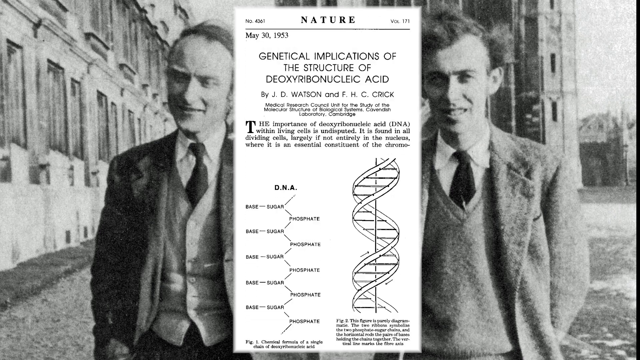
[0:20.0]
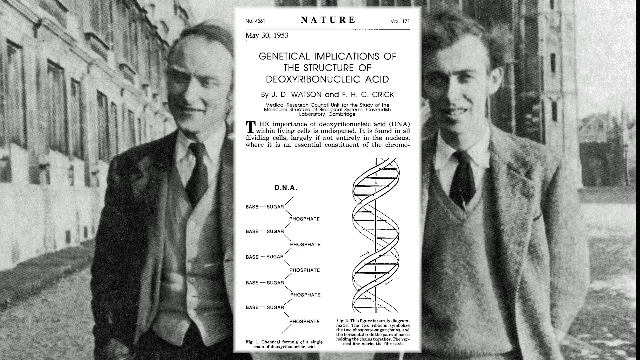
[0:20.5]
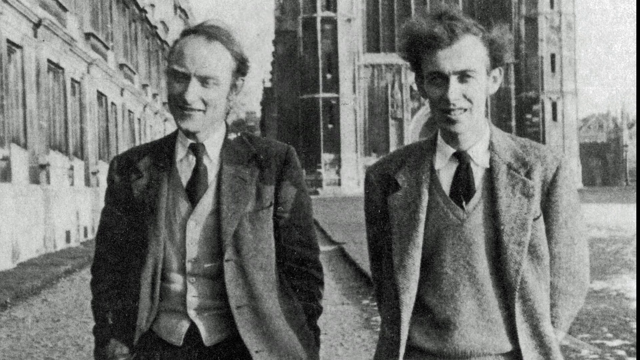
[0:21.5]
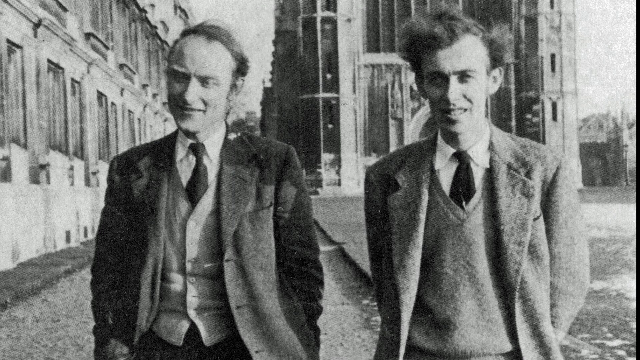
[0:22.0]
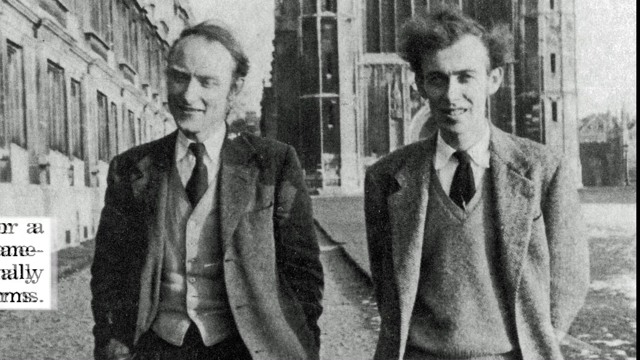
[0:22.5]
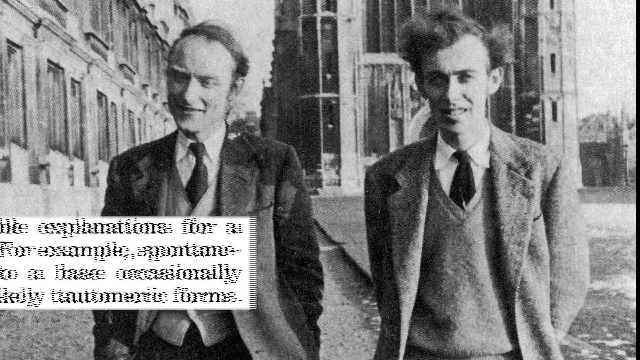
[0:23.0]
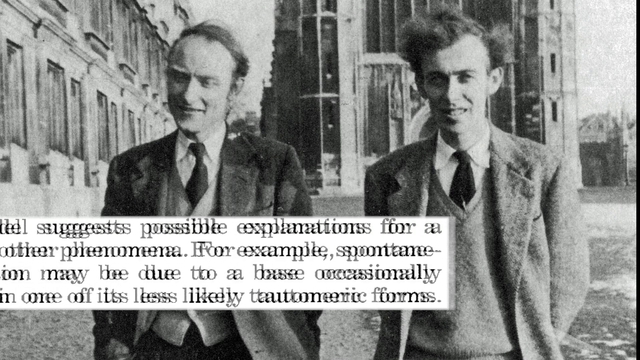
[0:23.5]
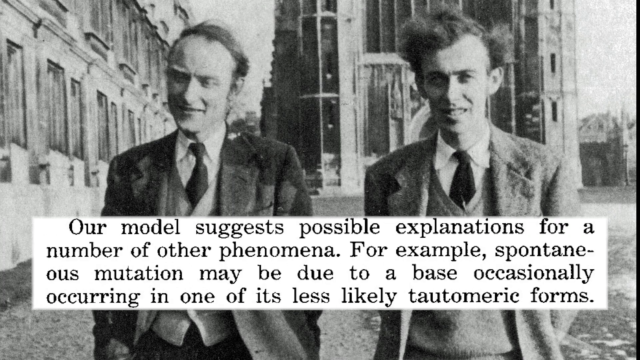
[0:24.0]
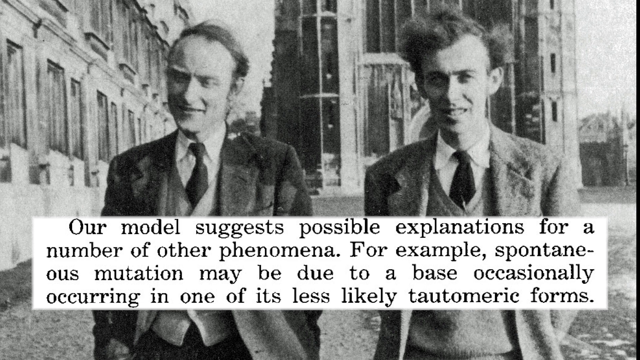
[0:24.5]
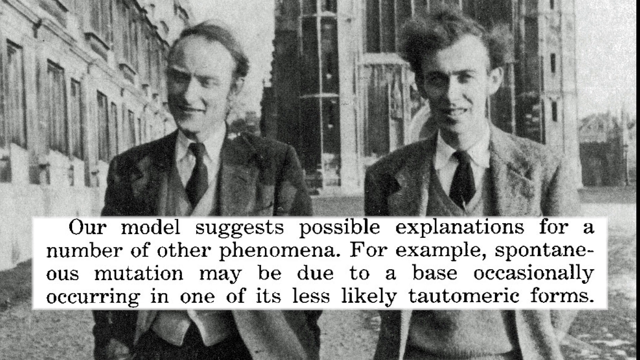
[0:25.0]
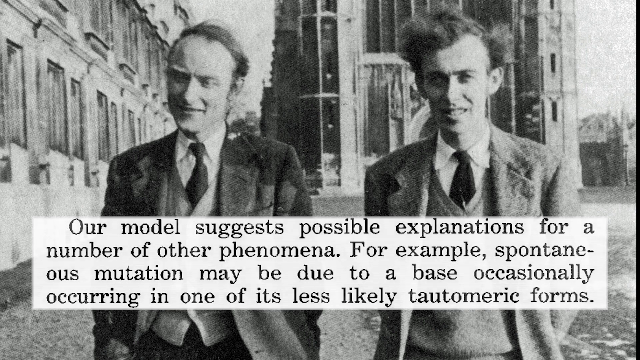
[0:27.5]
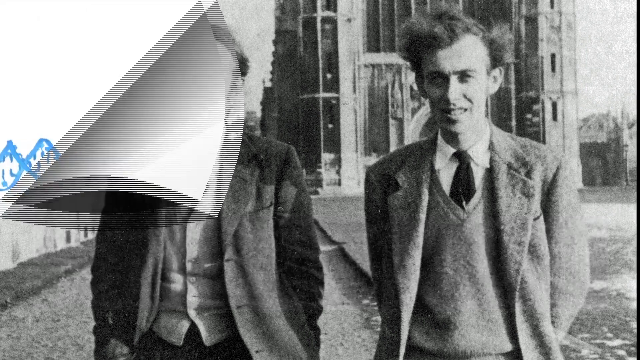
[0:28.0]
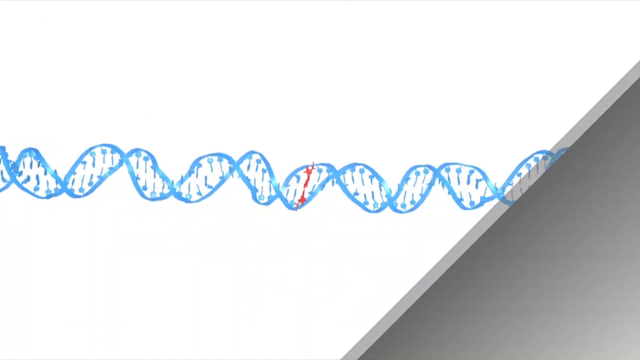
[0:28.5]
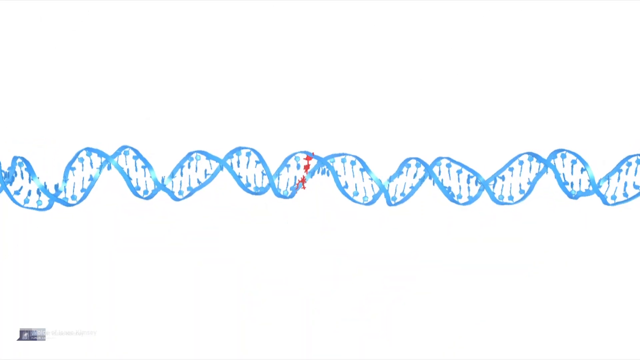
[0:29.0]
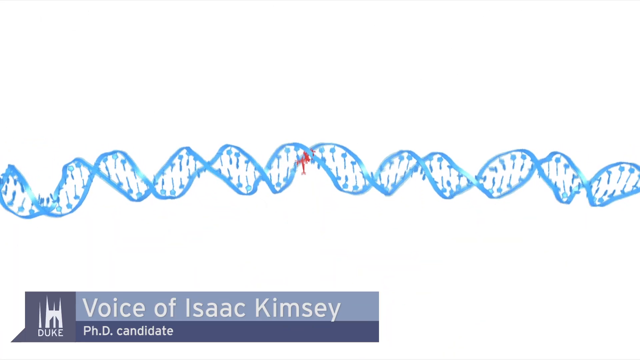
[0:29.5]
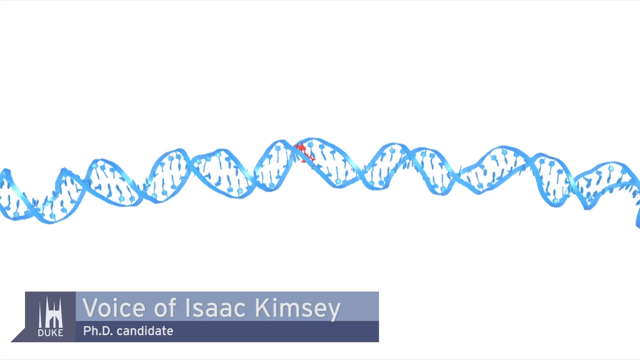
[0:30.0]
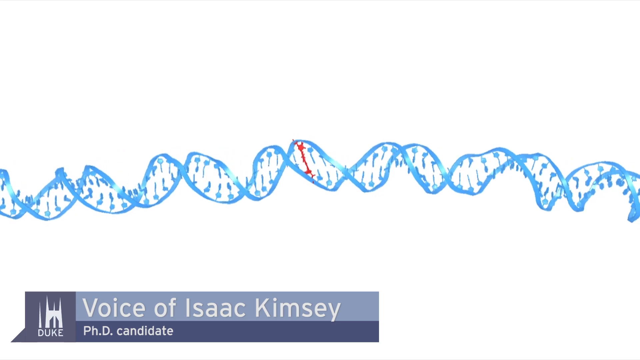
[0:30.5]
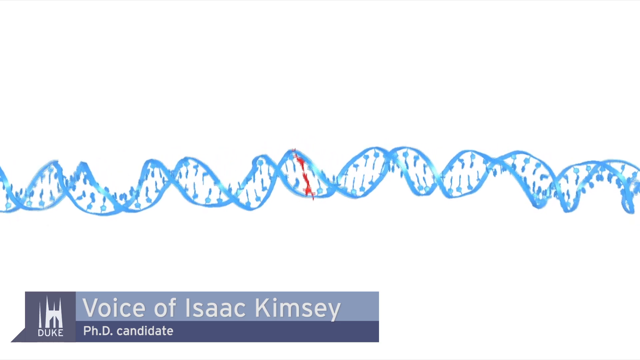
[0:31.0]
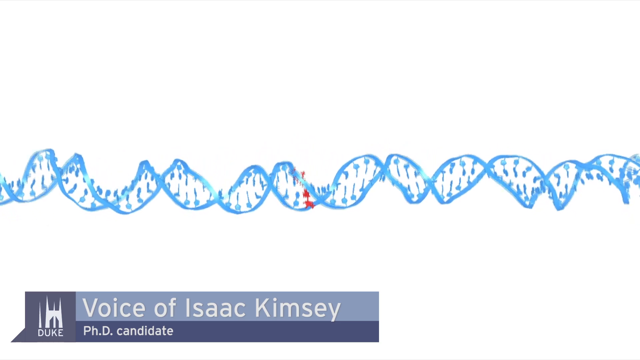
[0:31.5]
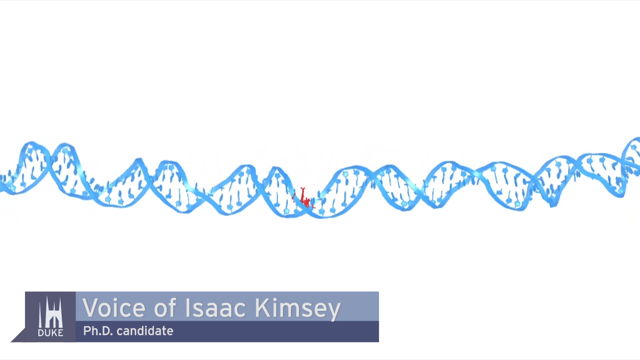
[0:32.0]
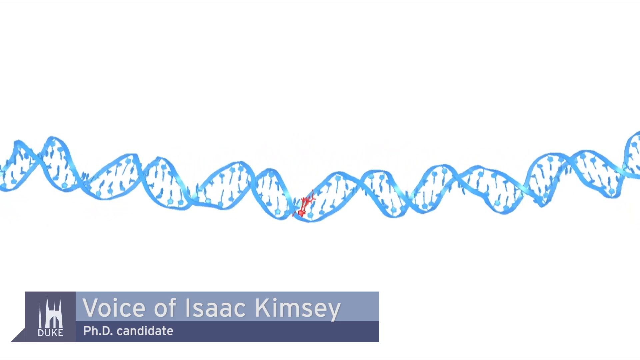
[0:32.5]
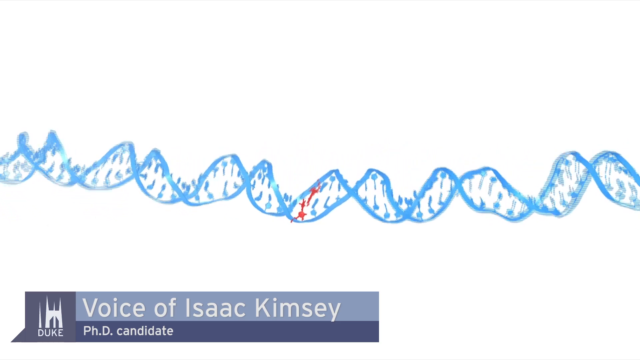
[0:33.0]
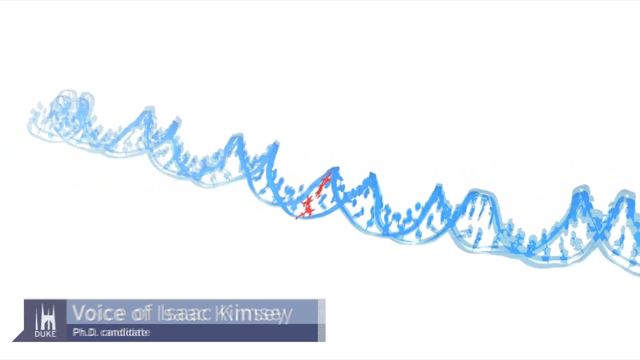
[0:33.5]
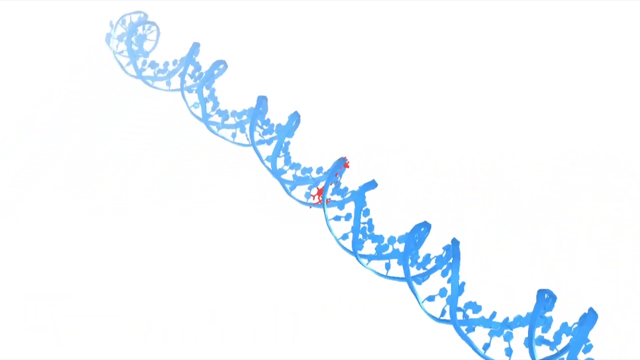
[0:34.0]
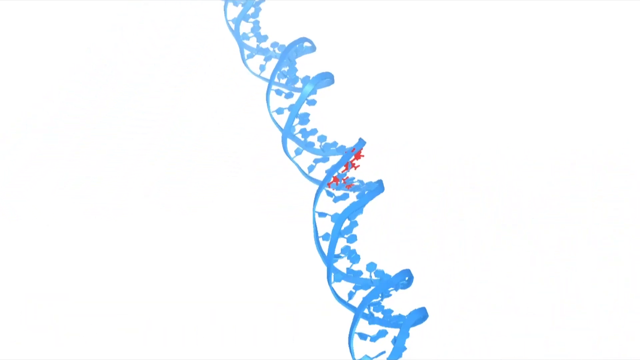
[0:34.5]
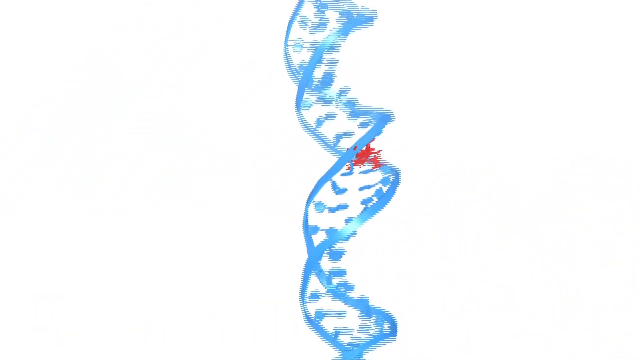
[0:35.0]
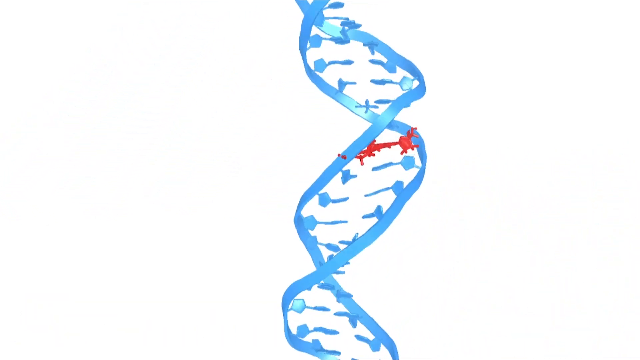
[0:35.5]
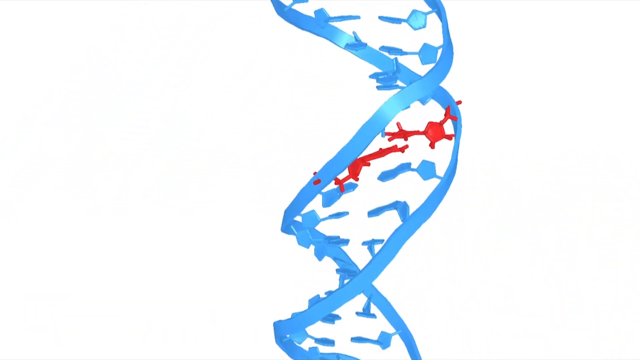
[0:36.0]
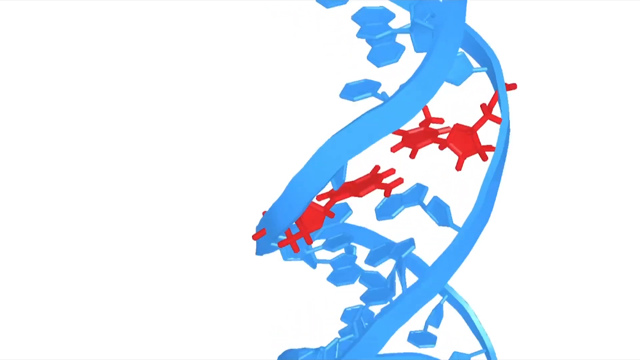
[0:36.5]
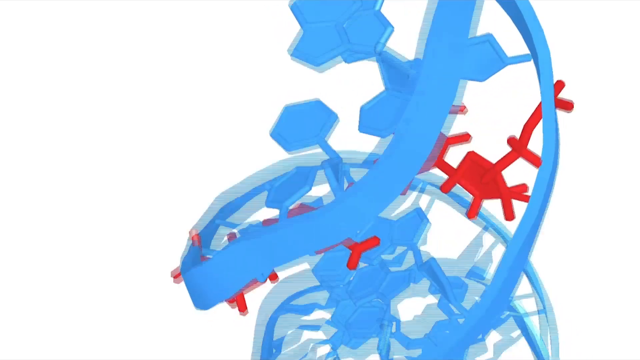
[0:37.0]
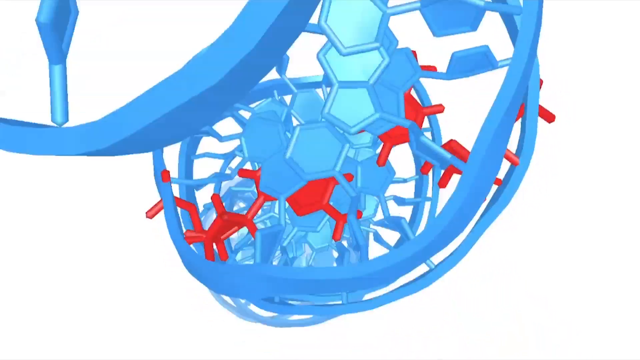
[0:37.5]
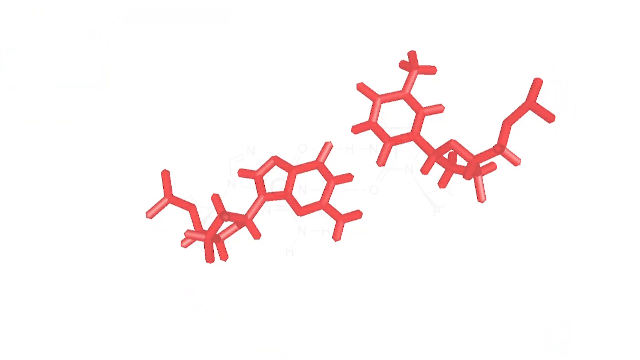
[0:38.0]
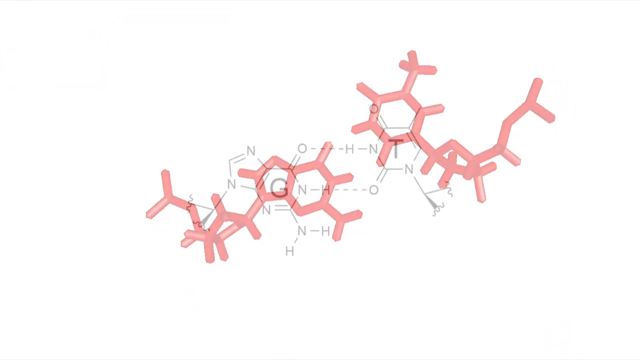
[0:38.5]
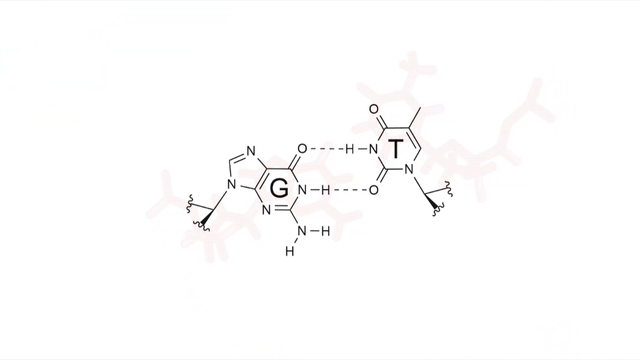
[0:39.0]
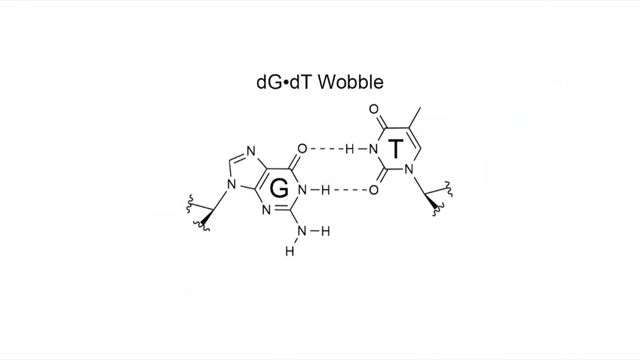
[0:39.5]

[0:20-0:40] The two men could be Watson and Crick. The article shows "Nature" and the title "genetical implications of the structure of deoxyribonucleic acid", followed by text about DNA within living cells. In the middle, the DNA's base, sugar and phosphate are shown as its structural formula in figure one on the left side. Figure two on the right side shows the curving DNA strand, both strands, with its bases connected to one another. The text disappears along with the diagram, and another text appears: "Our model suggests possible explanations for a number of other phenomena. For example, spontaneous mutation may be due to a base occasionally occurring in one of its less likely". The page flips to the blue DNA strand with a red mutation area, and at the bottom it says "voice of Isaac Kimsey, PhD candidate". The video zooms in on the mutation part of the strand and shows its molecular structure.